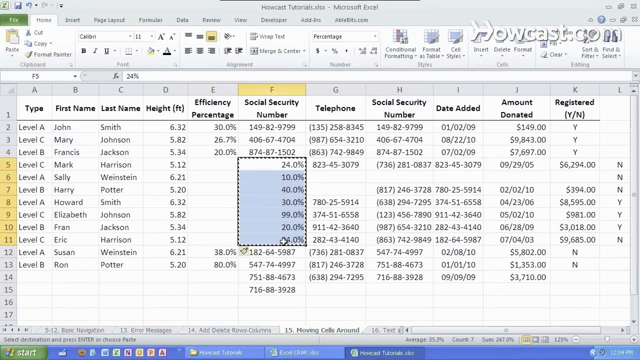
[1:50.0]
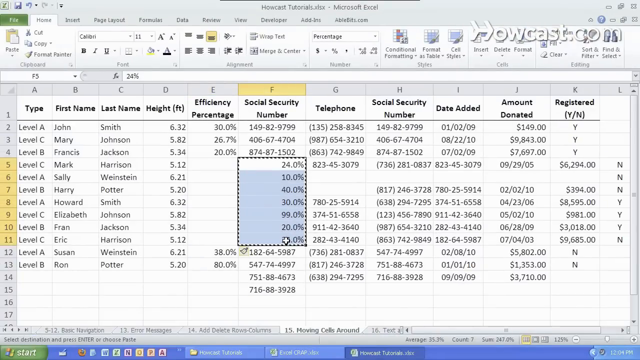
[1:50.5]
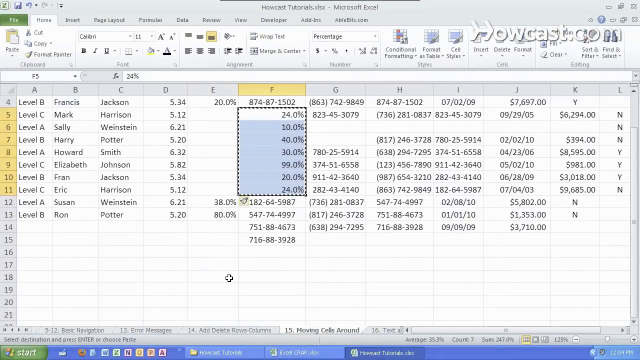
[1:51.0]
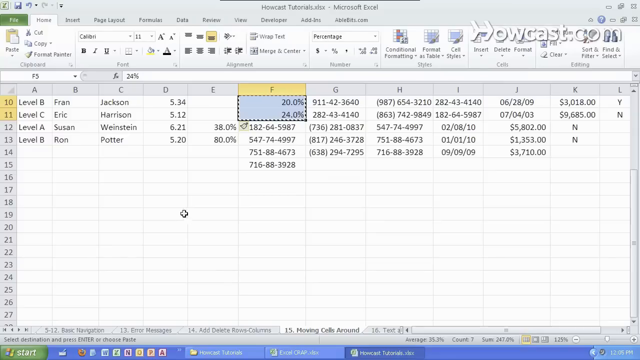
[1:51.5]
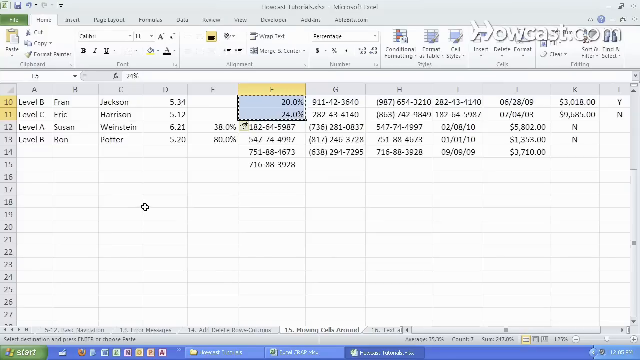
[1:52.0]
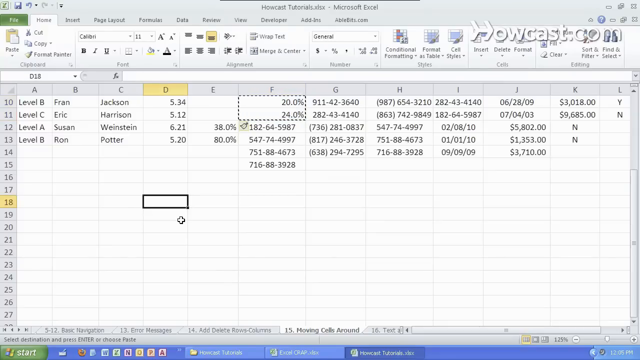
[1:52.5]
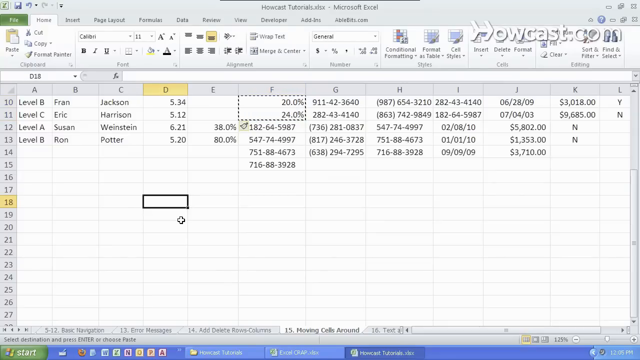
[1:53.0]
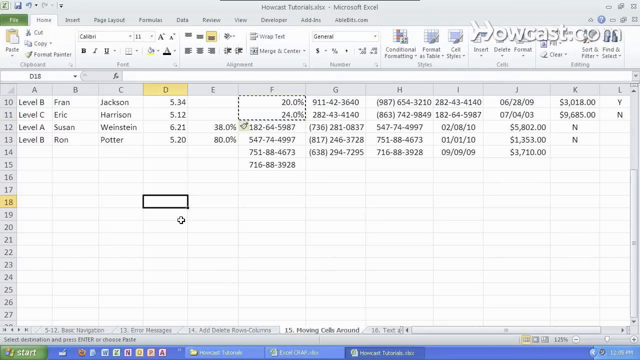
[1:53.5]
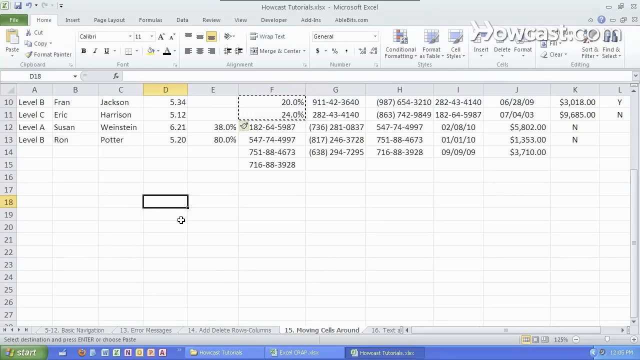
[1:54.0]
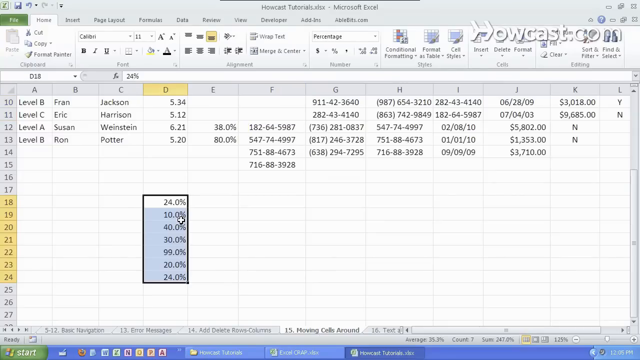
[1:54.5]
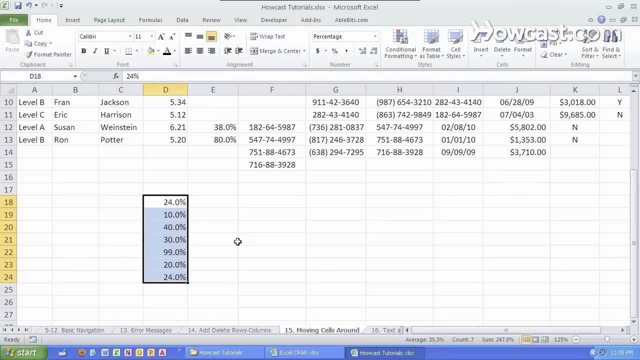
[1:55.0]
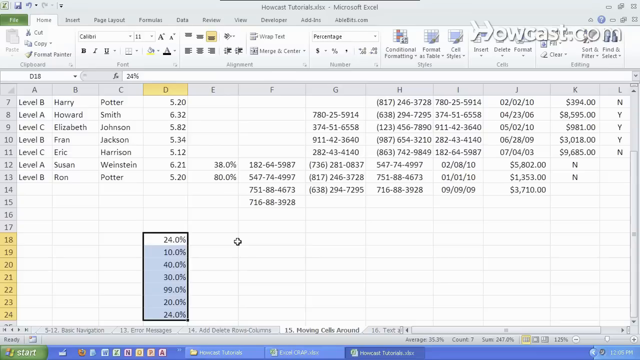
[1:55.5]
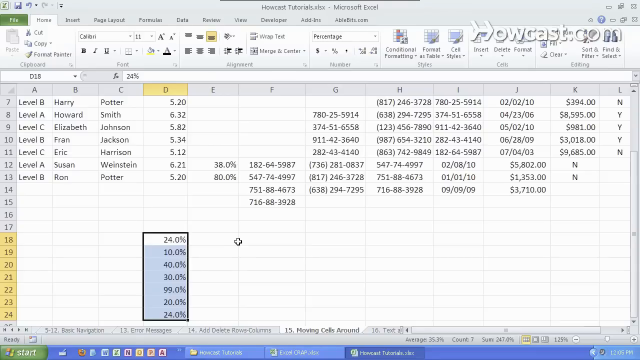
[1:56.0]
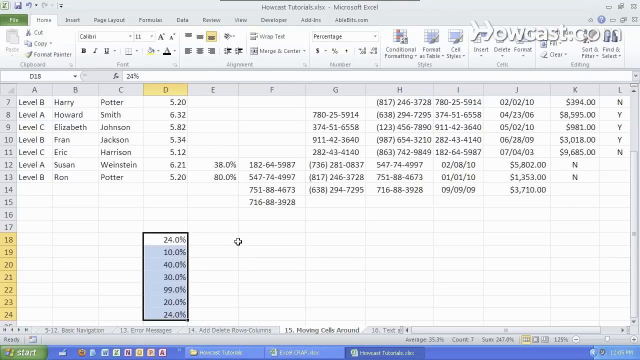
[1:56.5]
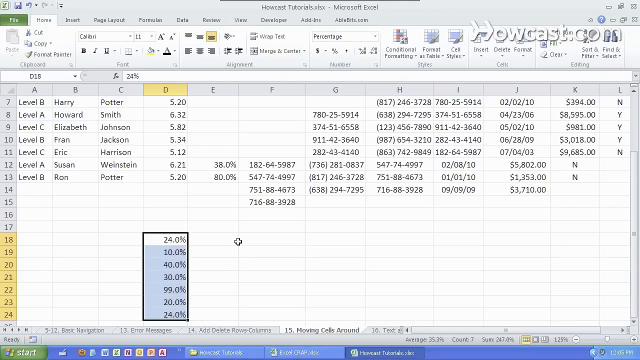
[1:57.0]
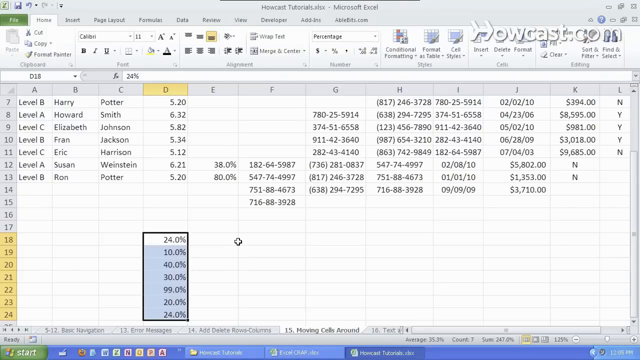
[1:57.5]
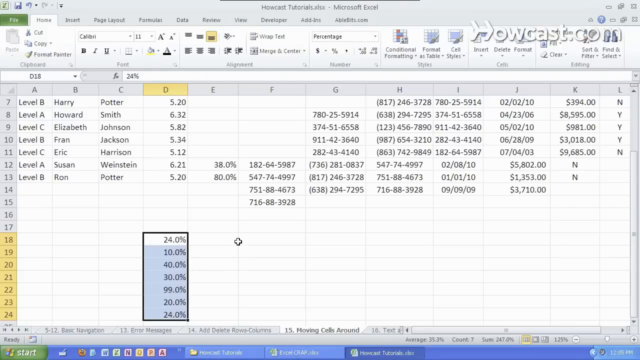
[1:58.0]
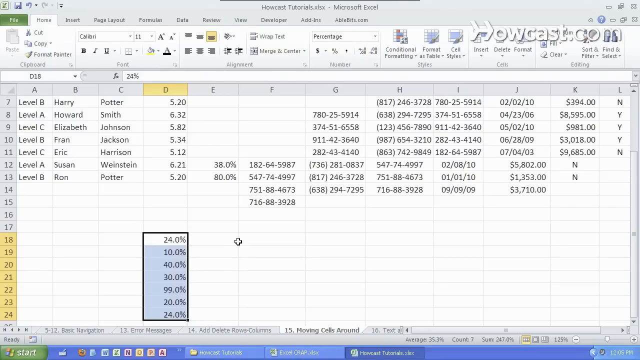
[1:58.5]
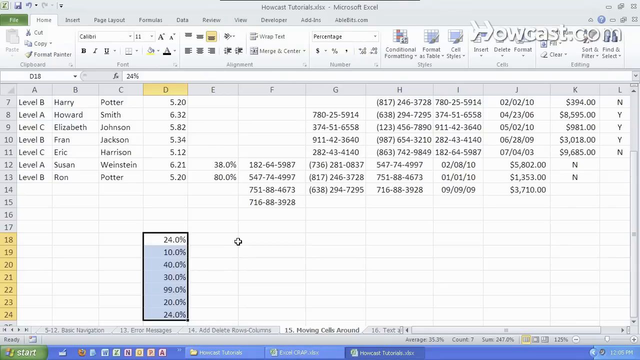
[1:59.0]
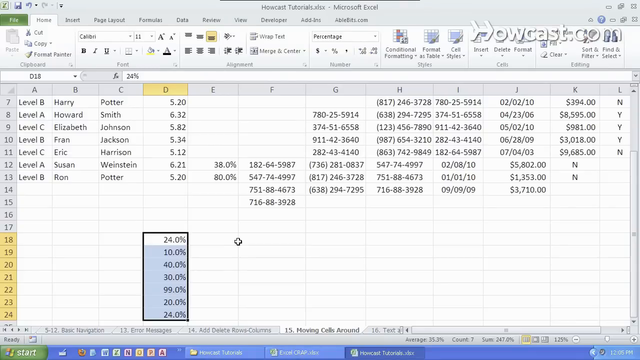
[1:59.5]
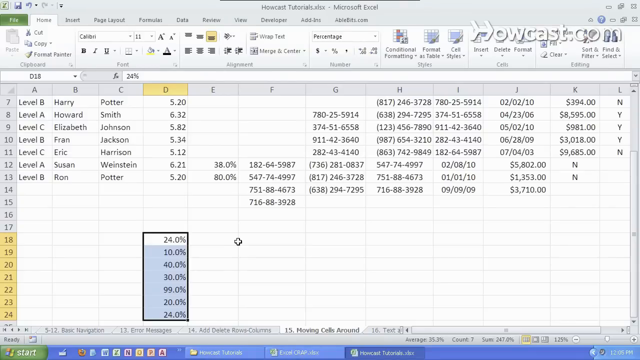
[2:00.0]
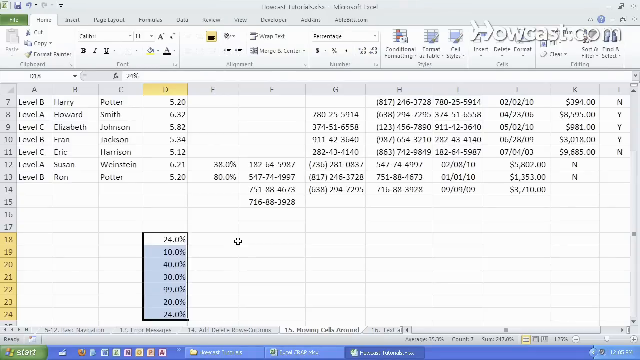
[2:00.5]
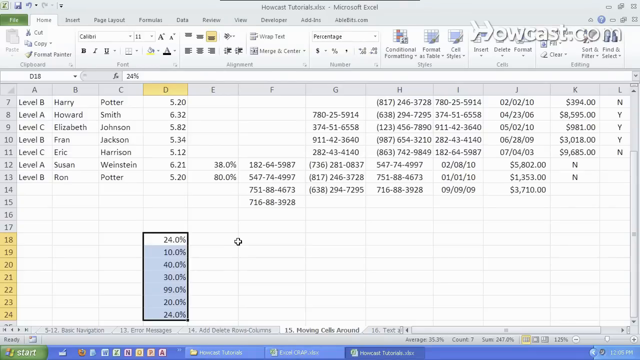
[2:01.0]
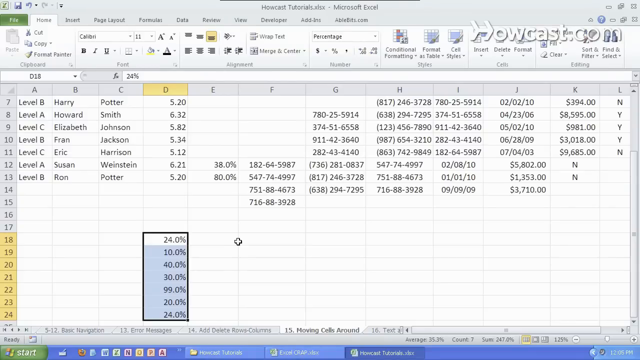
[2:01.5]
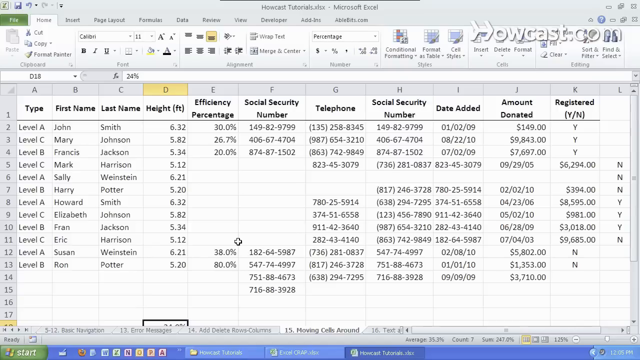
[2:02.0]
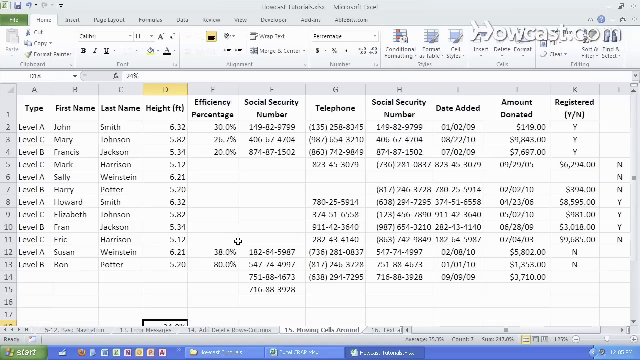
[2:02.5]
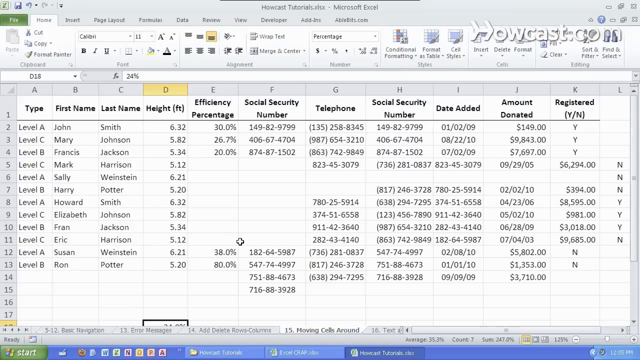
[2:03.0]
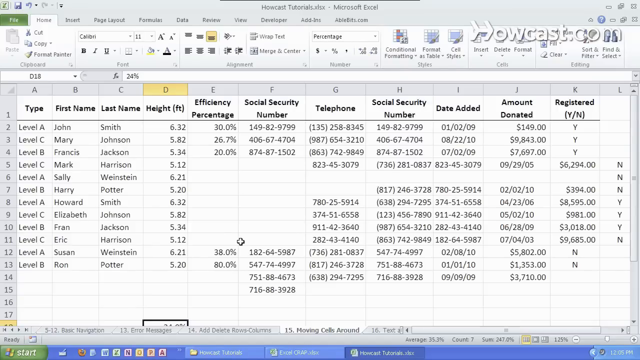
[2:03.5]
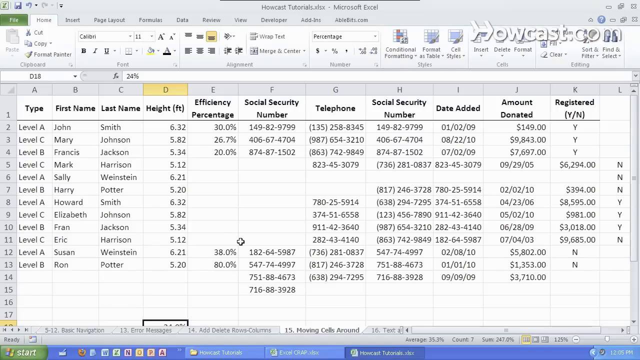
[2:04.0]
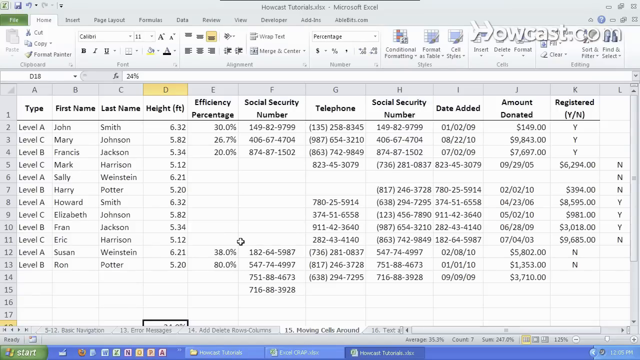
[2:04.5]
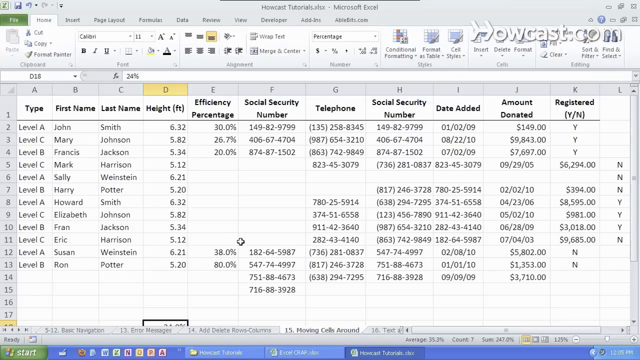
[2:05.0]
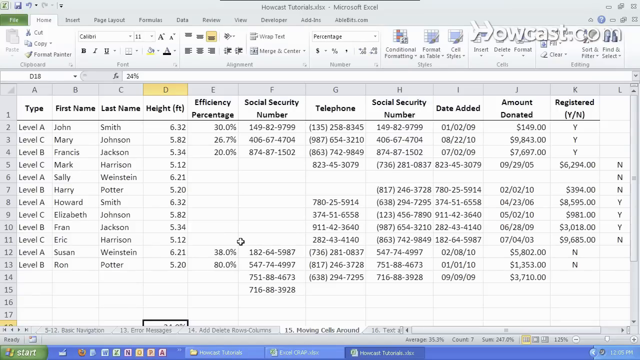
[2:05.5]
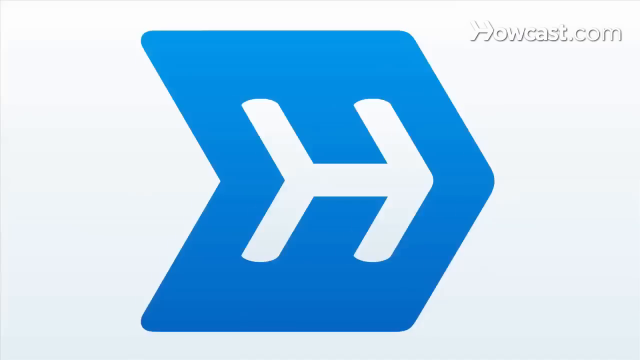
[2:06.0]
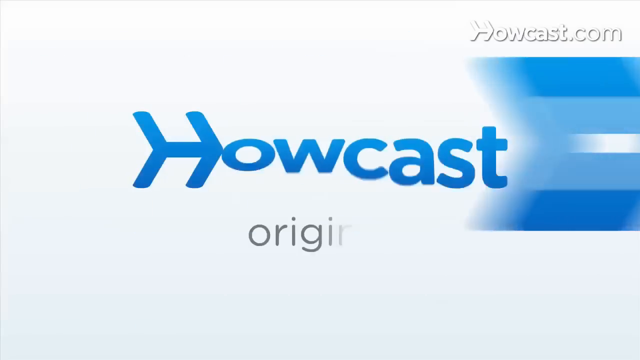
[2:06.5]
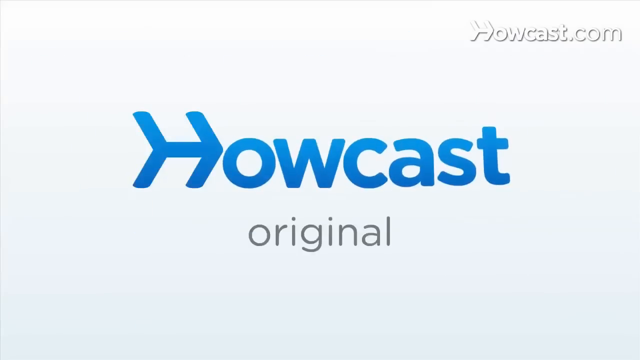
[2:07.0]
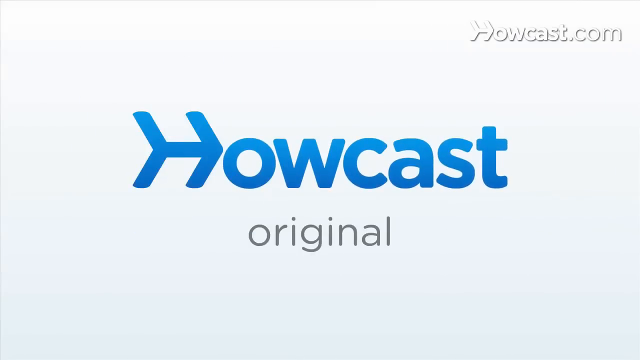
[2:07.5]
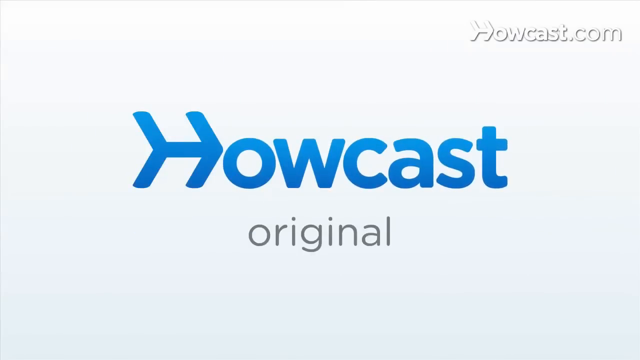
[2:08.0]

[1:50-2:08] The man scrolls down the Excel spreadsheet and highlights the 24%, 10%, 40%, 30%, 99%, 20% and 24% cells, seven cells toward the bottom left of the spreadsheet, and moves them down there. He scrolls back up, and there seems to be a big space missing from the spreadsheet: everything after the height column is pushed to the right once, and in the social security number column the first entry is pushed down twice. Many cells are misplaced and out of order, making the sheet very messy and hard to read. The video then cuts to the Howcast original.